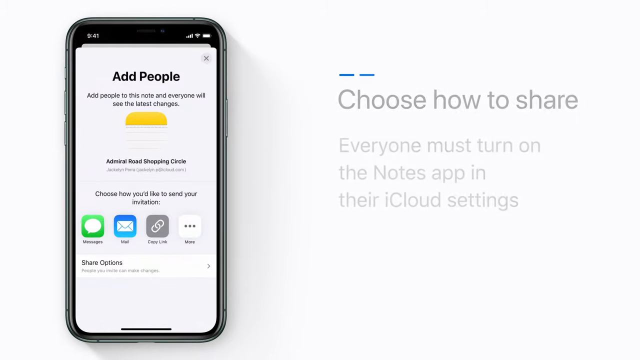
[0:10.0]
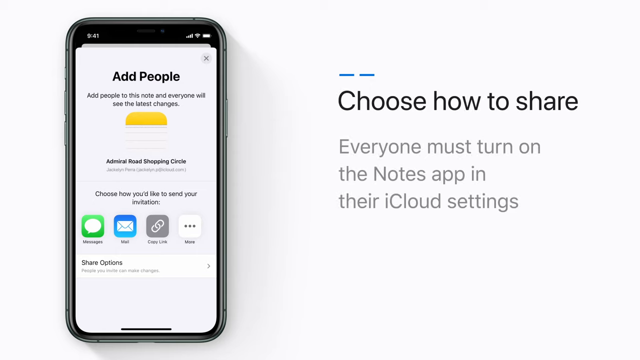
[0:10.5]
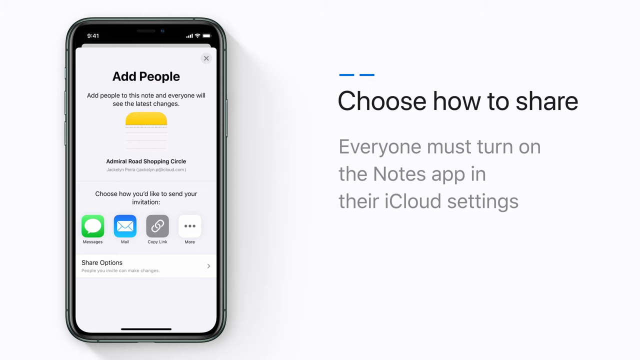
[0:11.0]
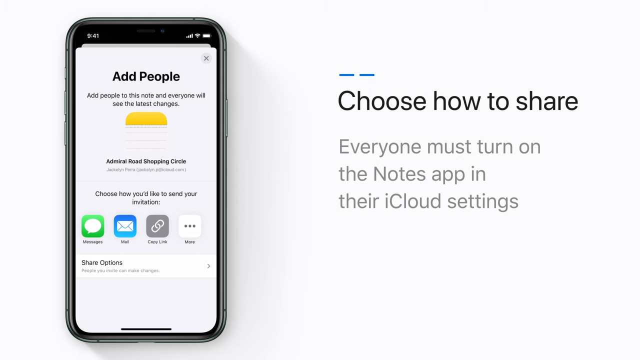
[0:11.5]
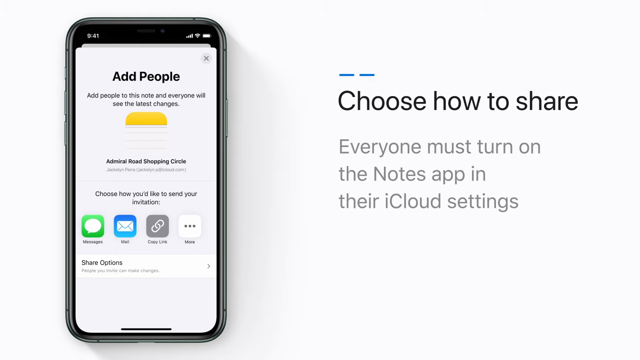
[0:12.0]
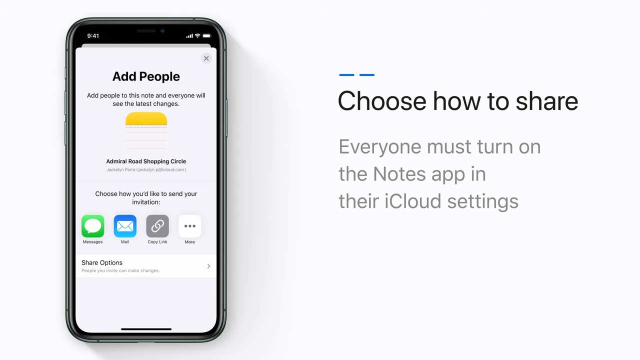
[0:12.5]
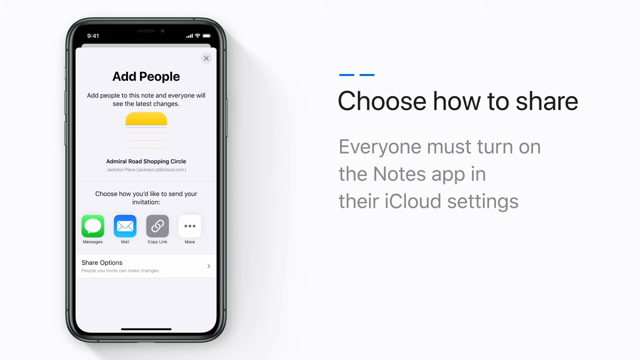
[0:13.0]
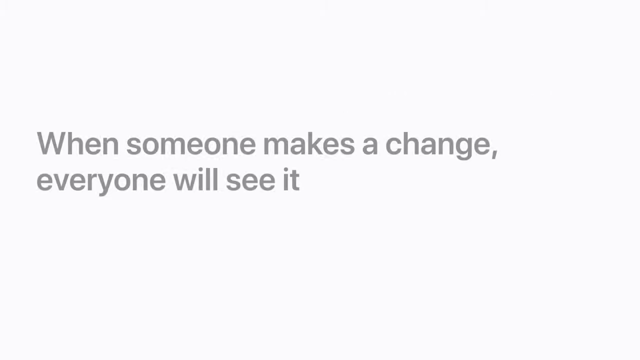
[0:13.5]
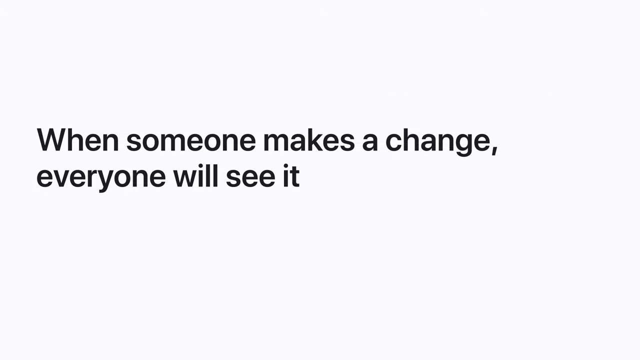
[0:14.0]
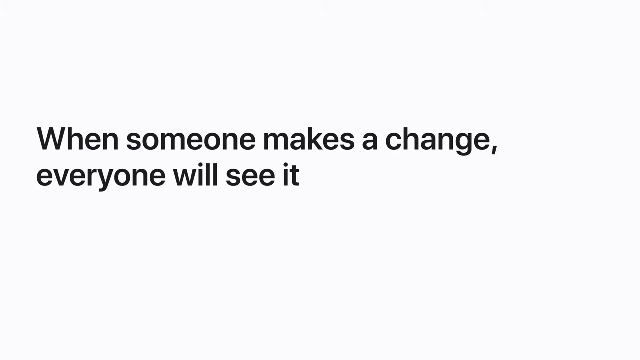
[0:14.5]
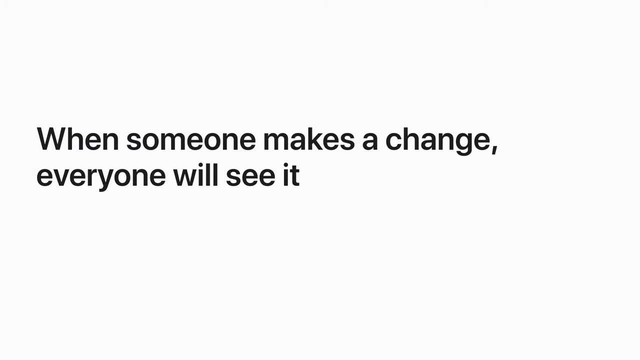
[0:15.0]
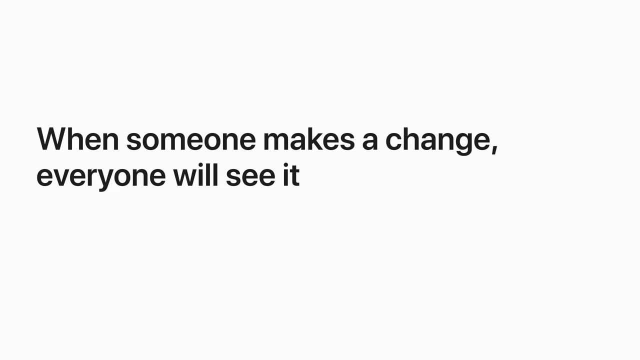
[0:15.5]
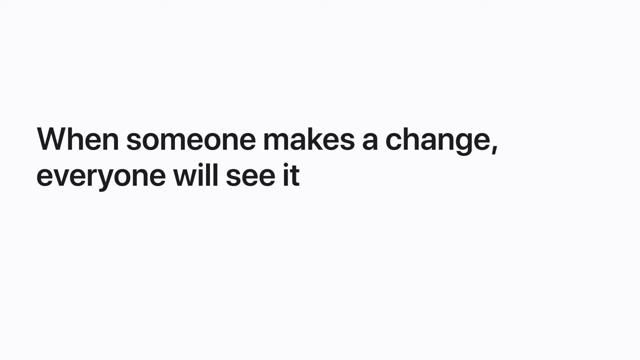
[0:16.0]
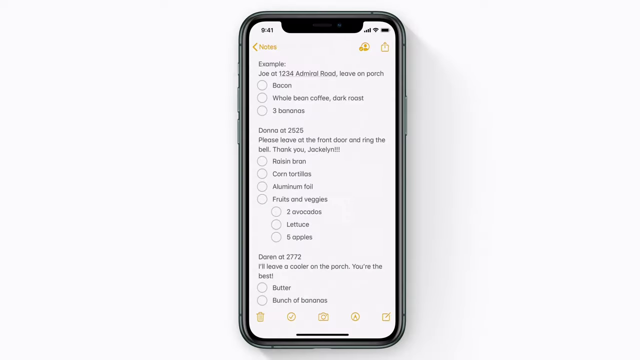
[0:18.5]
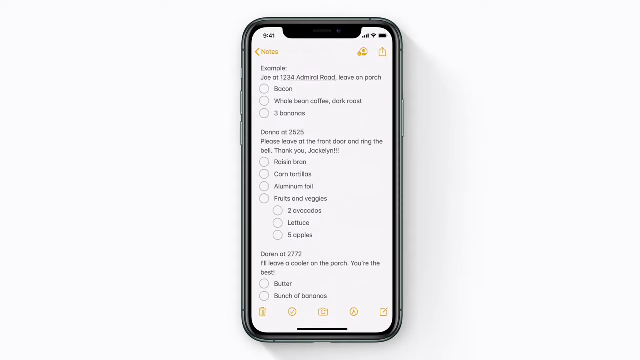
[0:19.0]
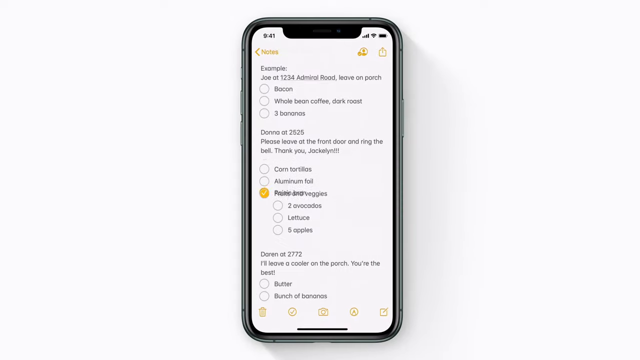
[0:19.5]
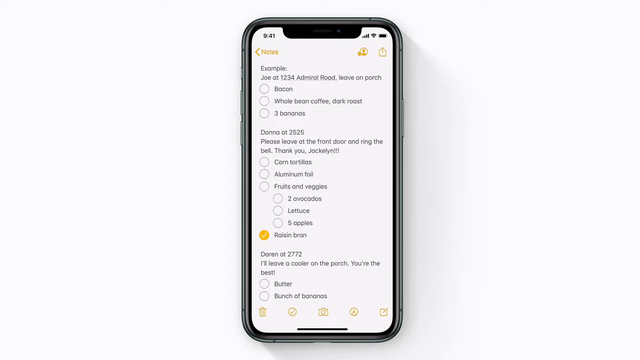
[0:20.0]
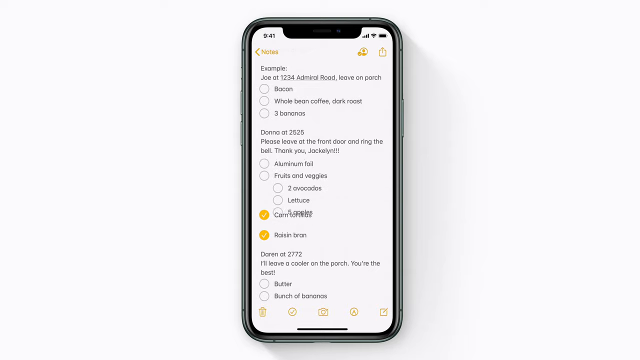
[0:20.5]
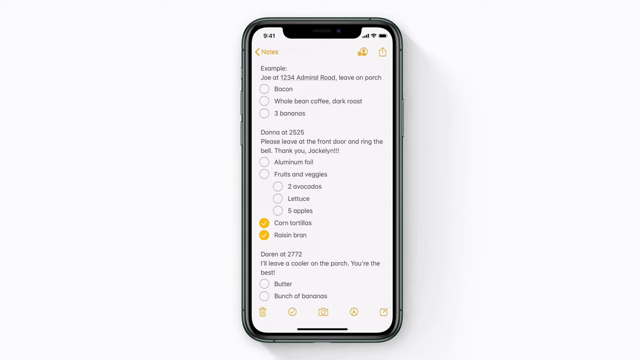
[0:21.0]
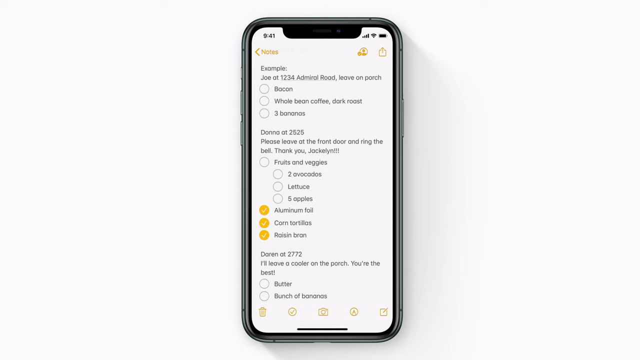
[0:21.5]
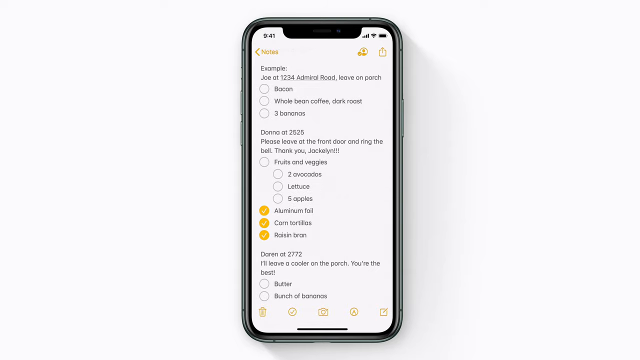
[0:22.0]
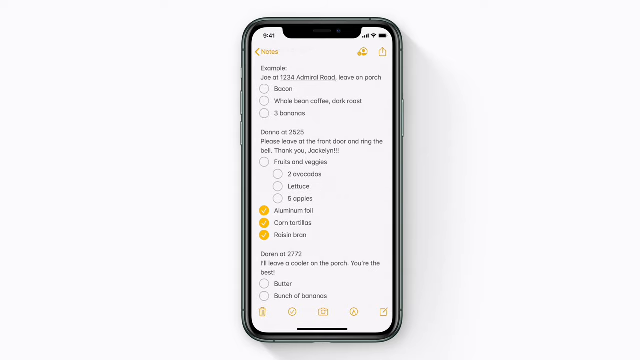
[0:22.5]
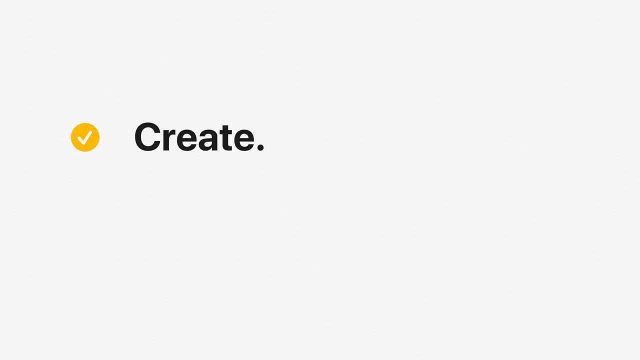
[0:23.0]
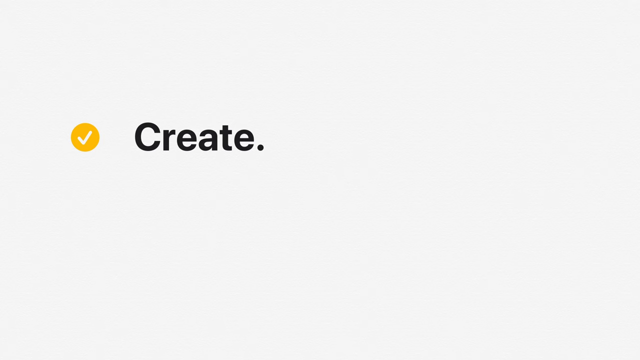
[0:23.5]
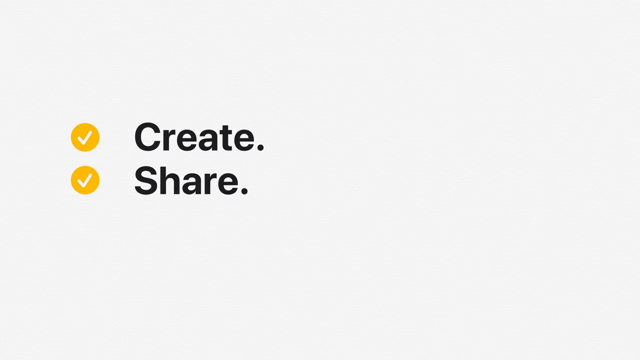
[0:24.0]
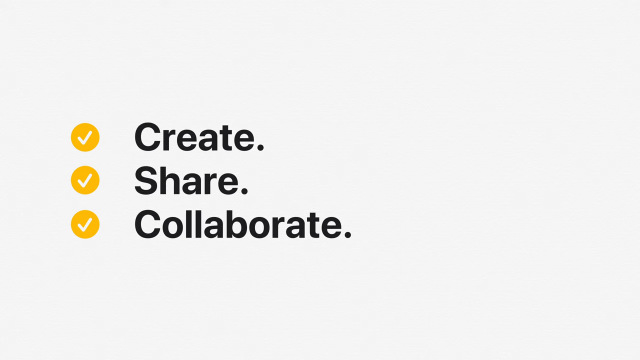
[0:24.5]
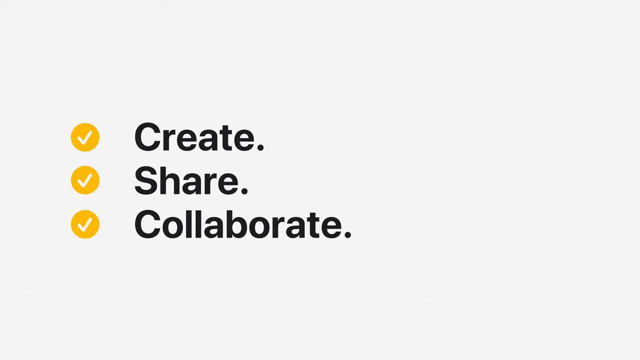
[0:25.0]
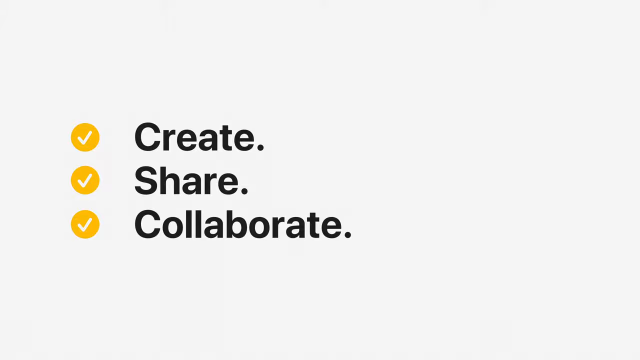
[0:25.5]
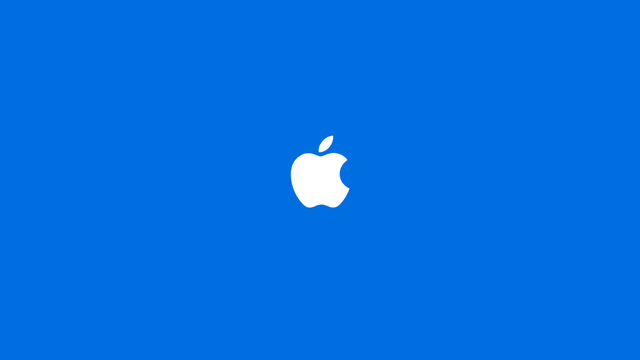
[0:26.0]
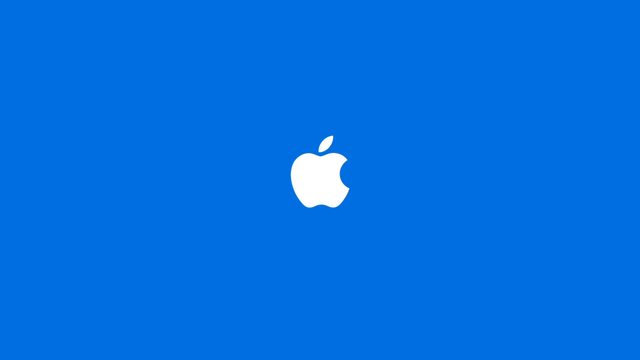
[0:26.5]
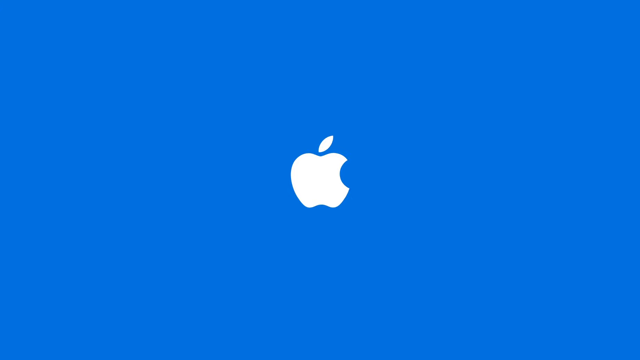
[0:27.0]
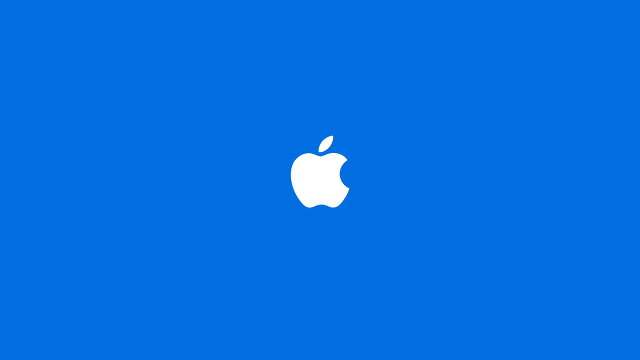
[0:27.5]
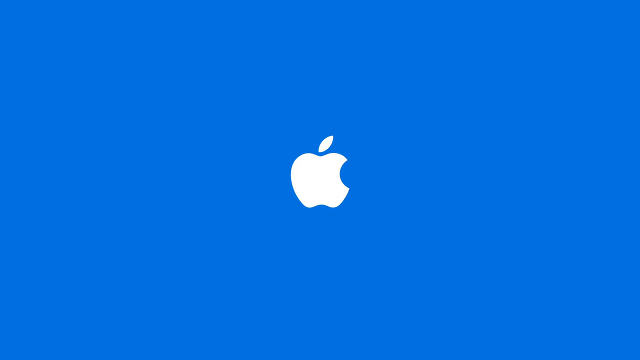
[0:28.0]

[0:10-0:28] The smartphone screen is on the left and the instructions are on the right. The instructions read "choose how to share. Everyone must turn on the notes app in their iCloud settings." The next screen says "when someone makes a change, everyone will see it." Someone's app is then shown as they move the buttons up and down to rearrange them and check them off, making checklists, across several different screens within the notes app. The next part of the instructions says "create and share, collaborate." The video ends on a blue background with the Apple logo in the middle. It is an explainer video about taking a note in the iCloud notes app and sharing it to collaborate with other people.